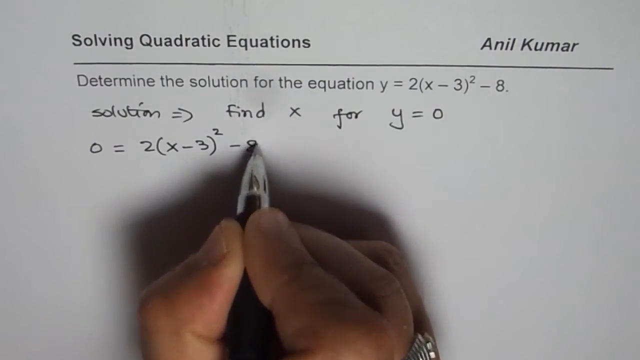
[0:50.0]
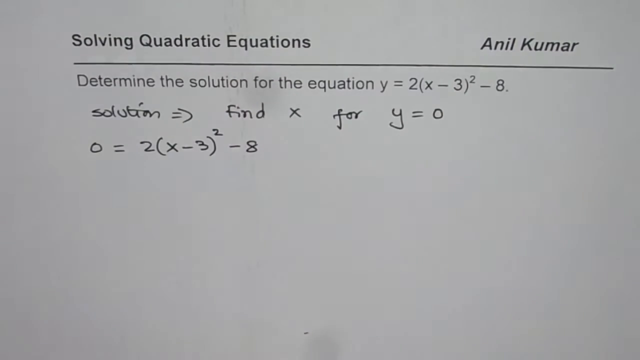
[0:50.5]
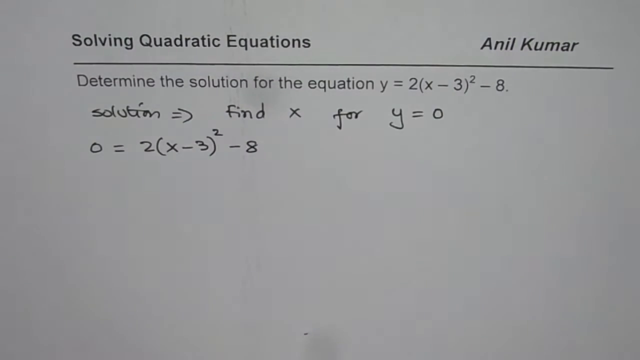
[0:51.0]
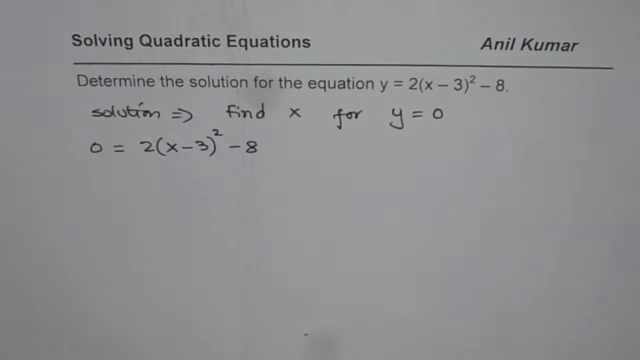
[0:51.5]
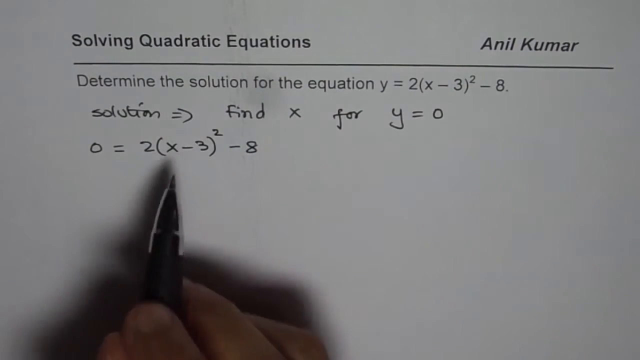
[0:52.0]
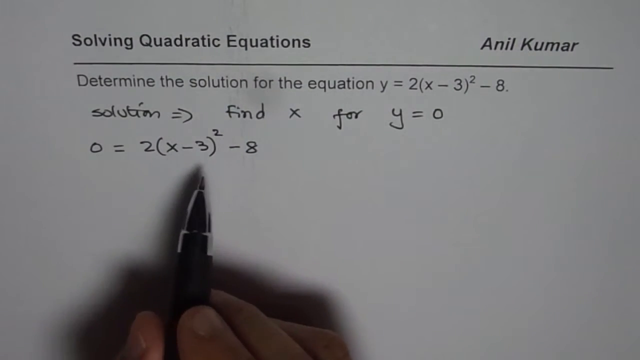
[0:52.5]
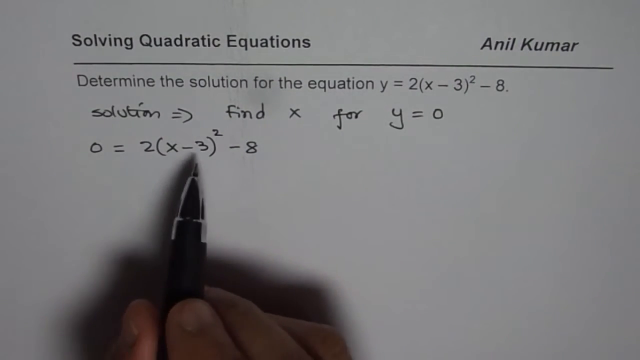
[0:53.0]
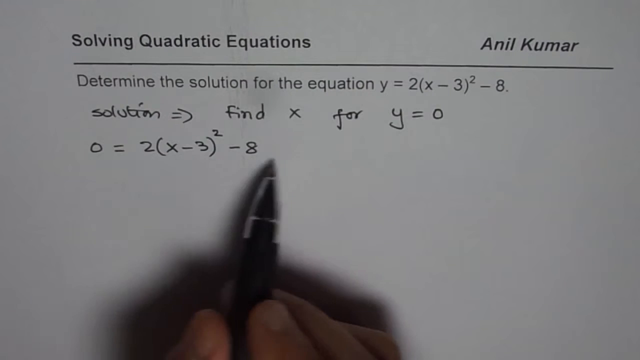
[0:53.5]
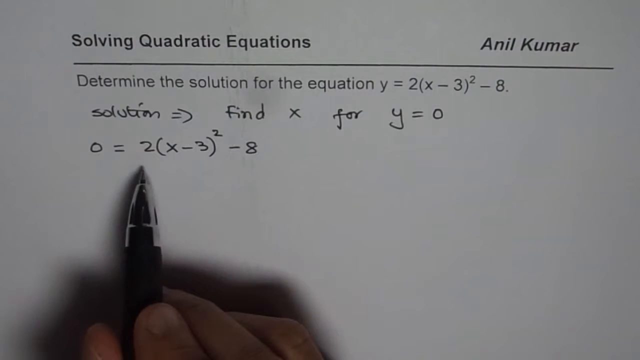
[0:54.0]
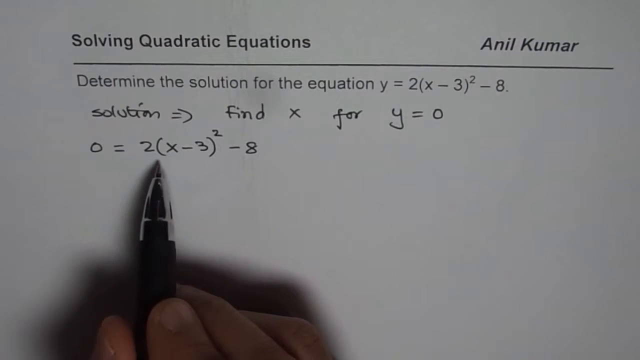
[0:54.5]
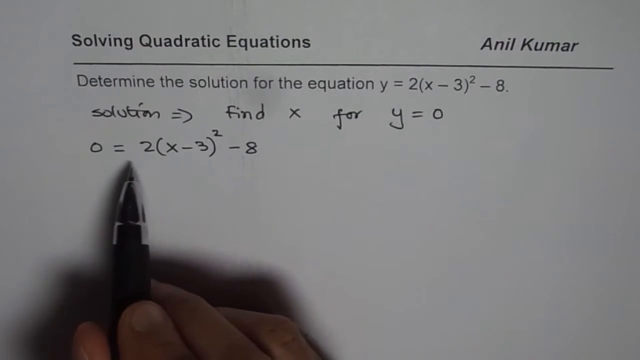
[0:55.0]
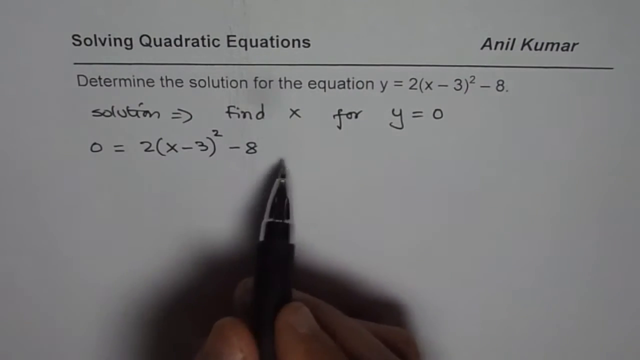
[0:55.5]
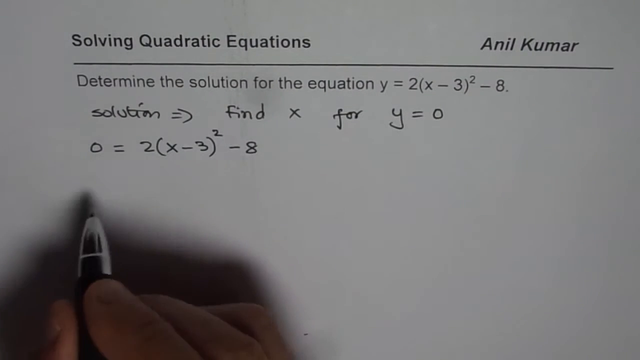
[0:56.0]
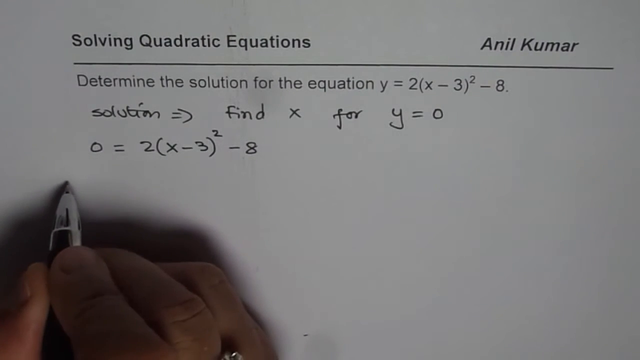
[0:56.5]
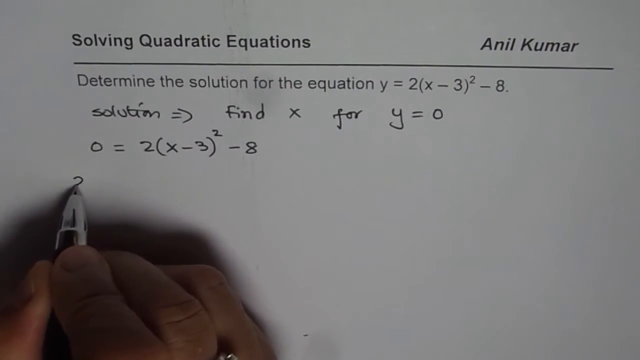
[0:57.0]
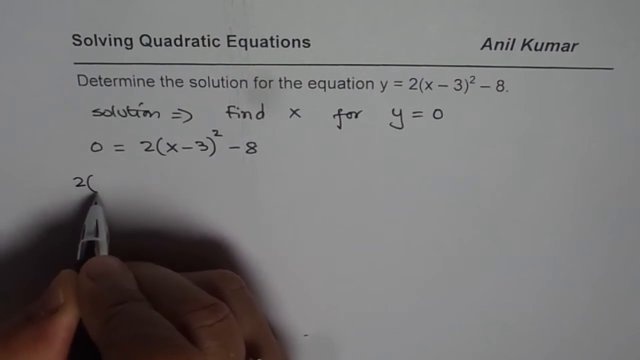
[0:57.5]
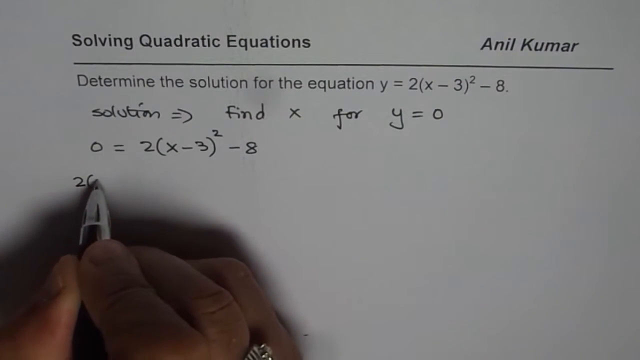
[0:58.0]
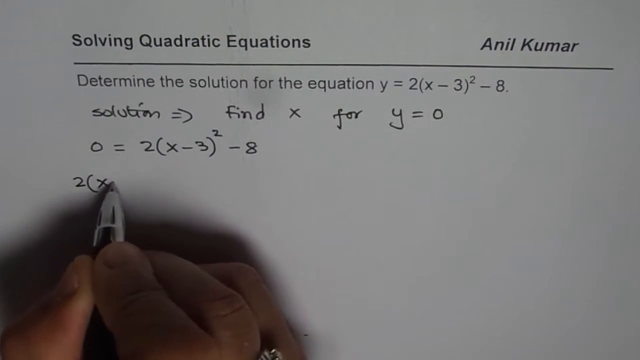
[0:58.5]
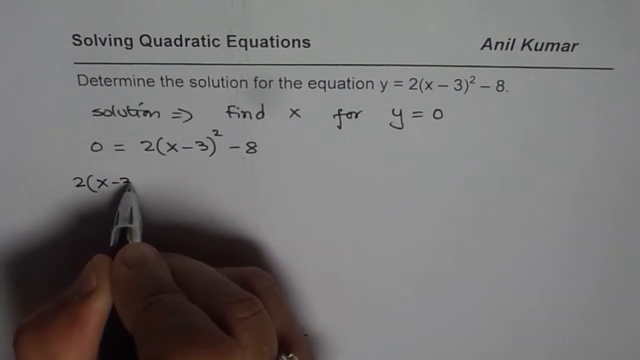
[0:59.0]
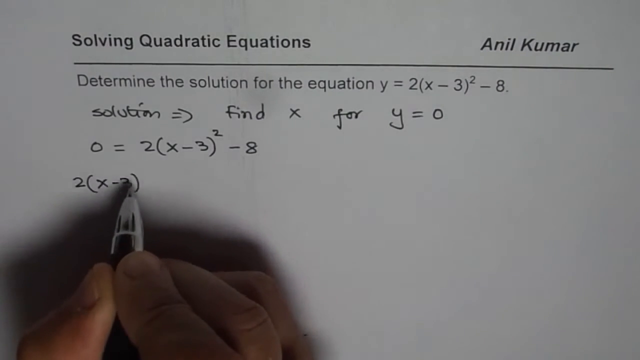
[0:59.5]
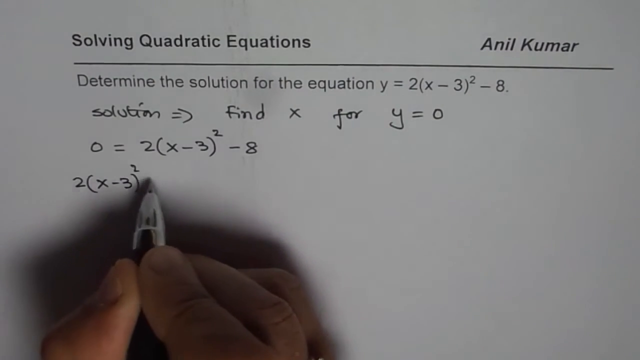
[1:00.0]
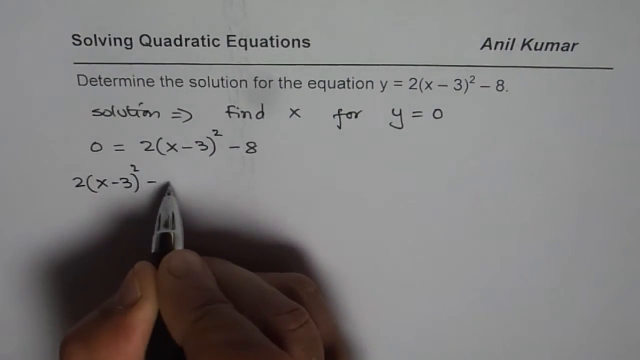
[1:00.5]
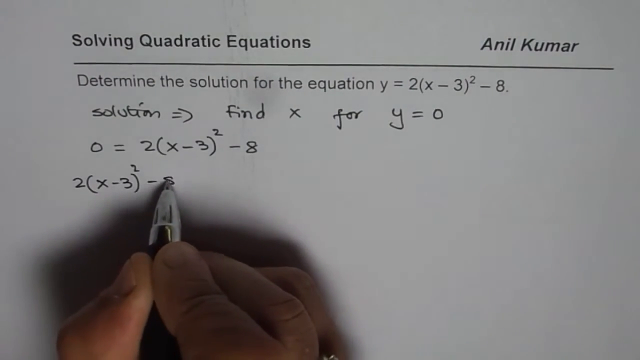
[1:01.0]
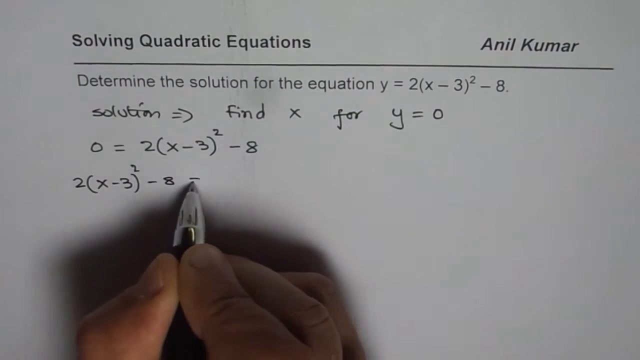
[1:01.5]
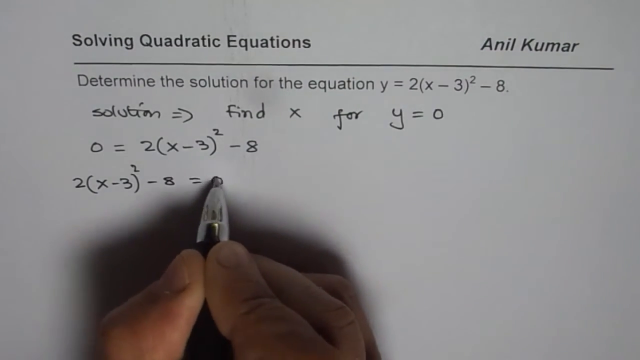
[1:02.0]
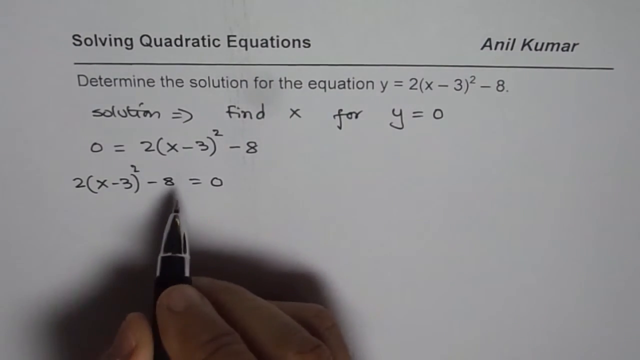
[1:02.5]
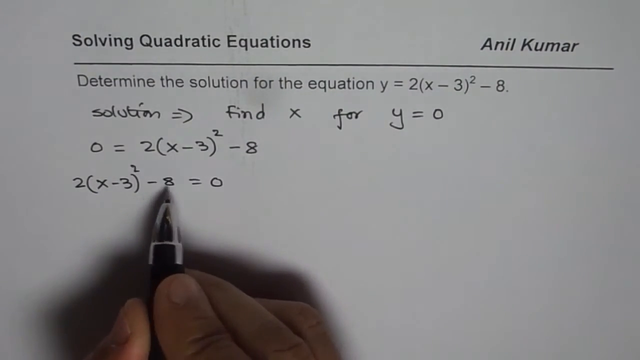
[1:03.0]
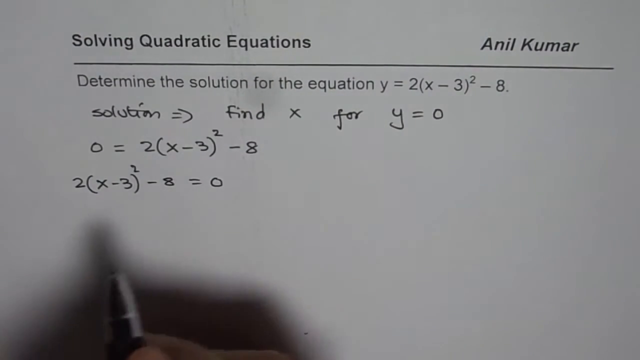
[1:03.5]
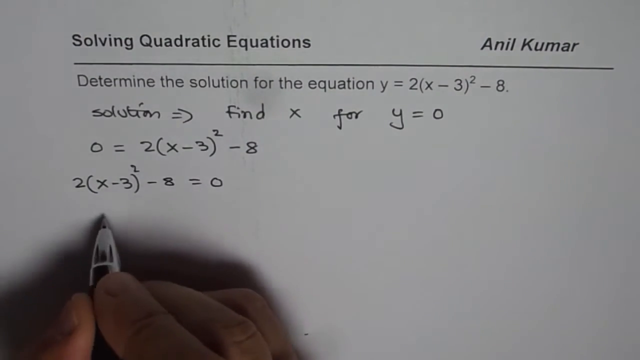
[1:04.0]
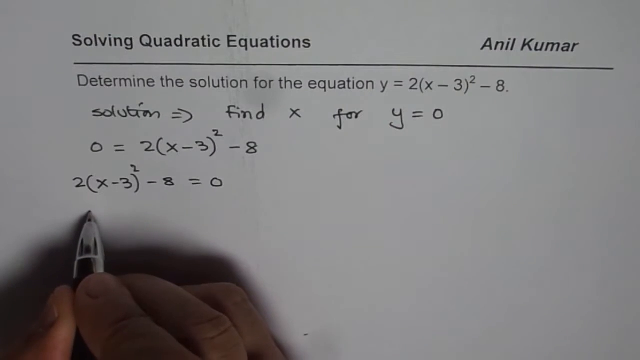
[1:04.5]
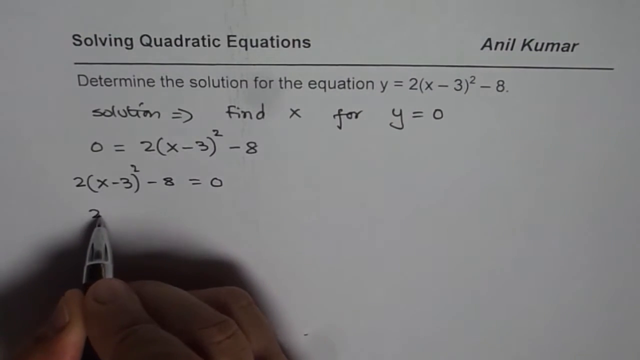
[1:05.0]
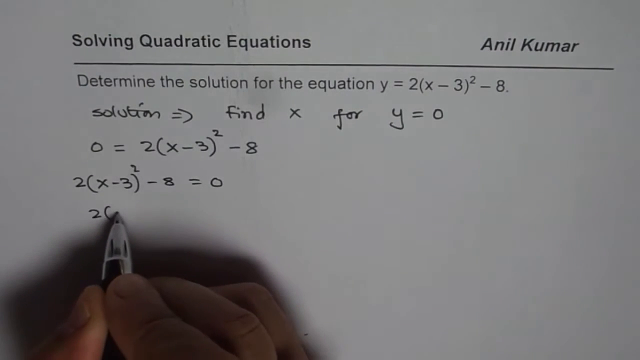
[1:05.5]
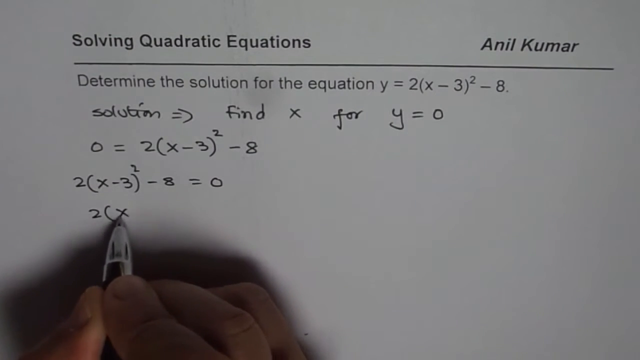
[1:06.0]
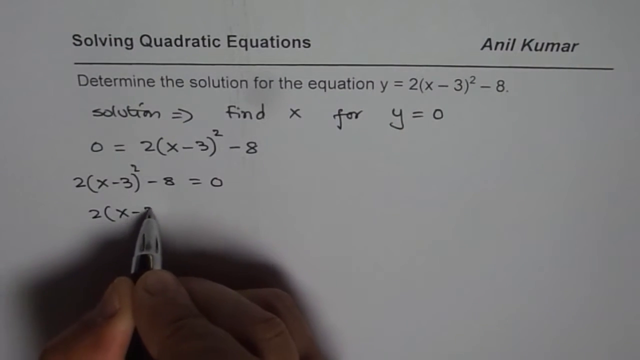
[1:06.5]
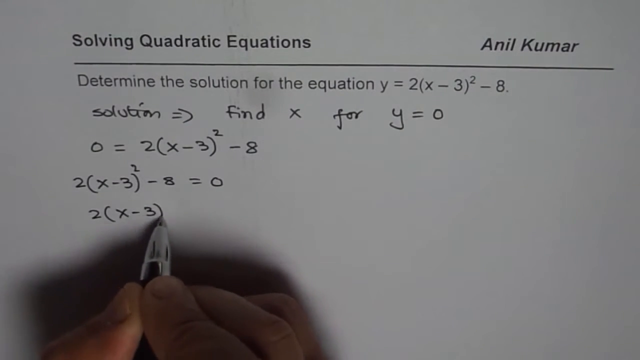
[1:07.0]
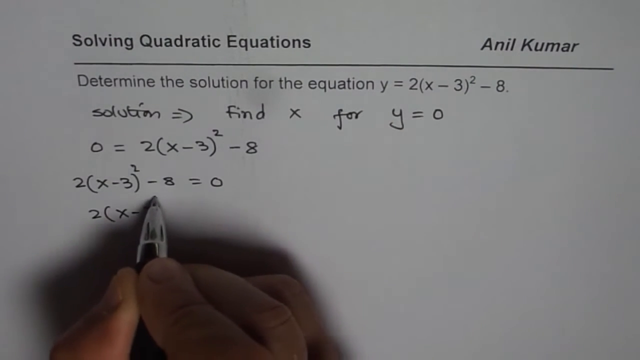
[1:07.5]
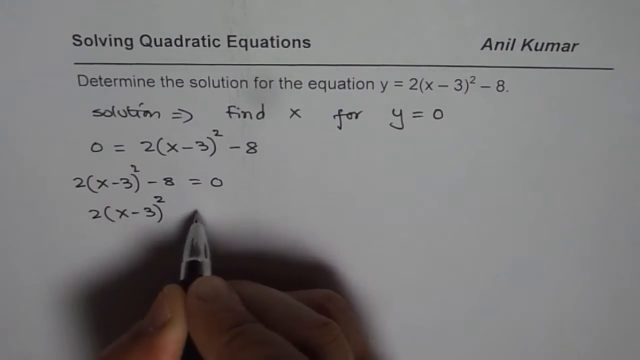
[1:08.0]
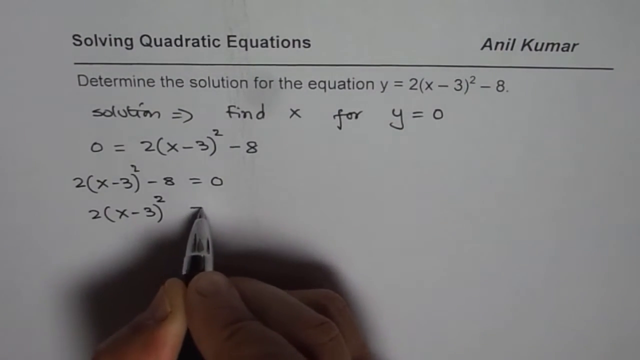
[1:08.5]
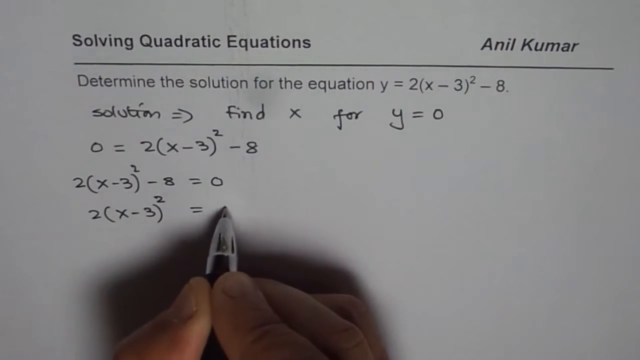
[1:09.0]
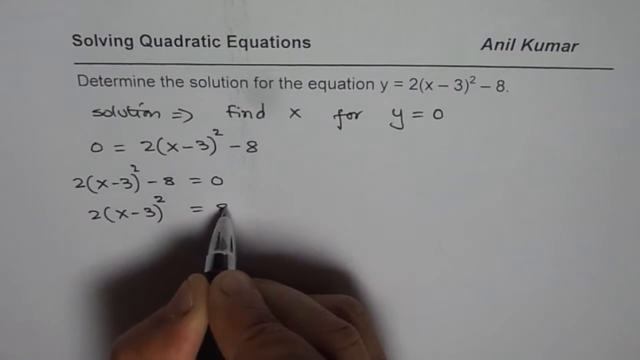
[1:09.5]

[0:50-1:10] At the top of the white paper is written "solving quadratic equations", followed by the equation "y = 2(x − 3)² − 8", "solution = find x for y = 0", and "0 = 2(x − 3)² − 8". The hand, wearing a silver ring on the middle finger and with small nails, holds a black-and-silver pen with black ink and writes "2(x − 3)² − 8 = 0" and then "2(x − 3)² = 8", working through the solution.